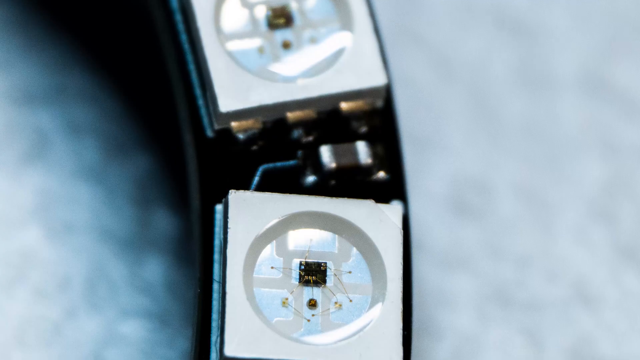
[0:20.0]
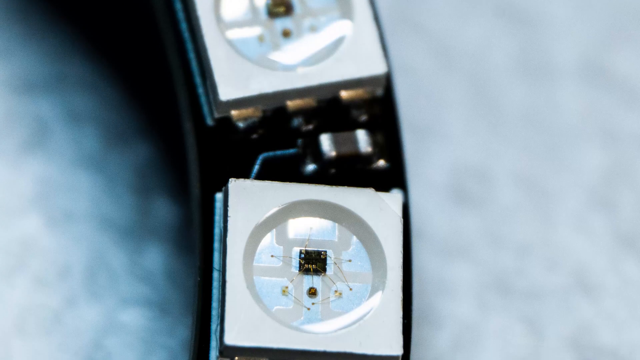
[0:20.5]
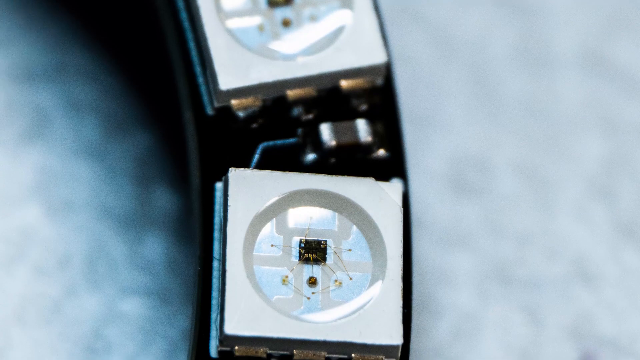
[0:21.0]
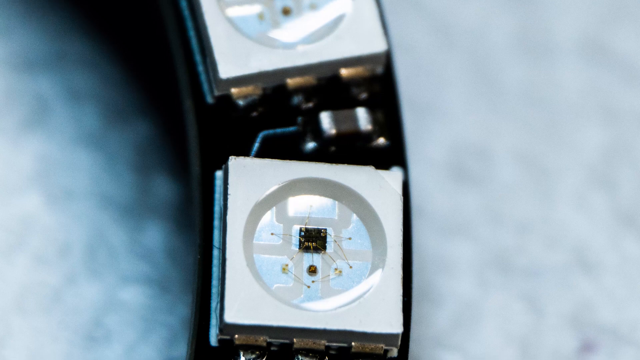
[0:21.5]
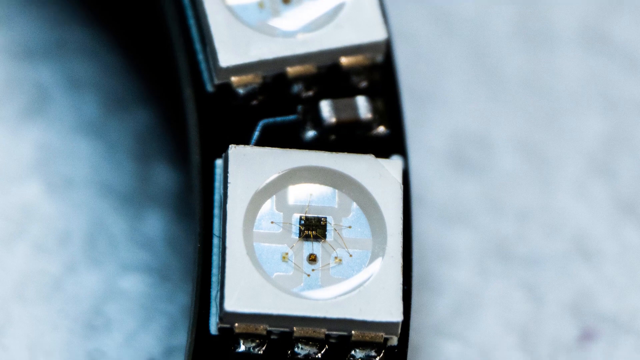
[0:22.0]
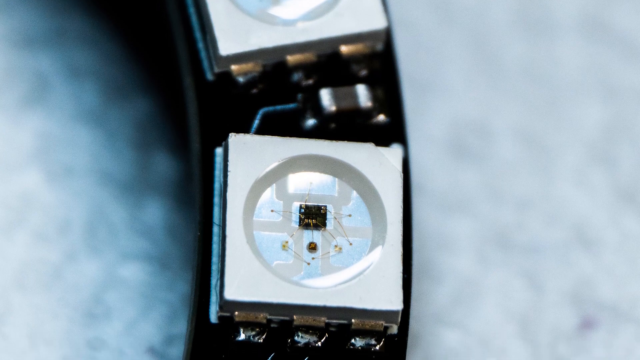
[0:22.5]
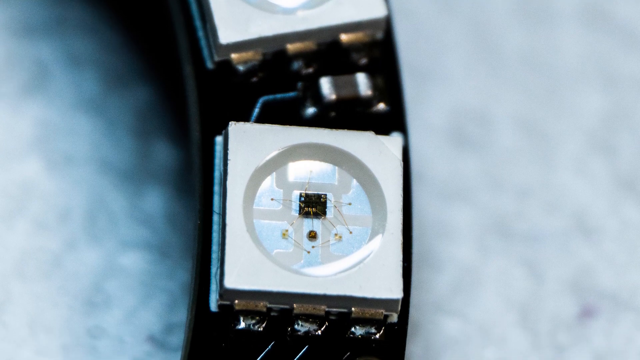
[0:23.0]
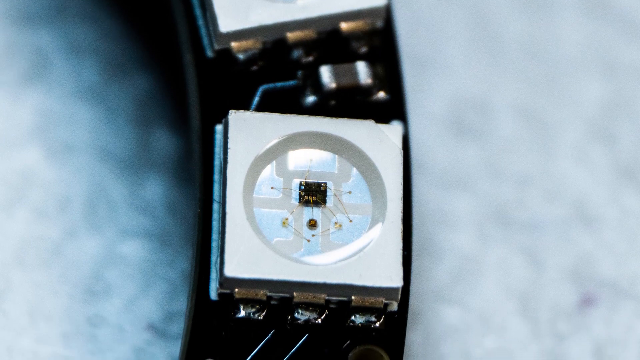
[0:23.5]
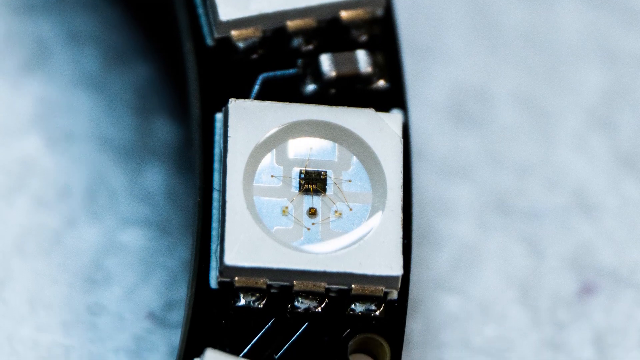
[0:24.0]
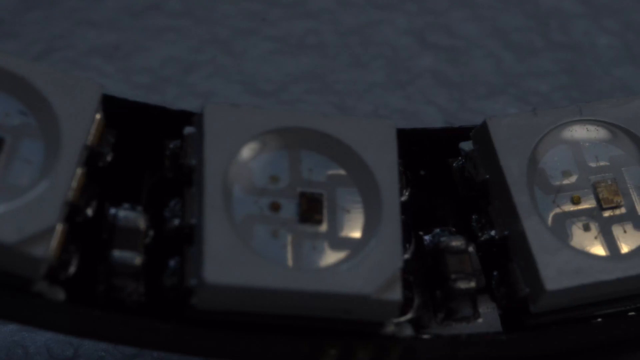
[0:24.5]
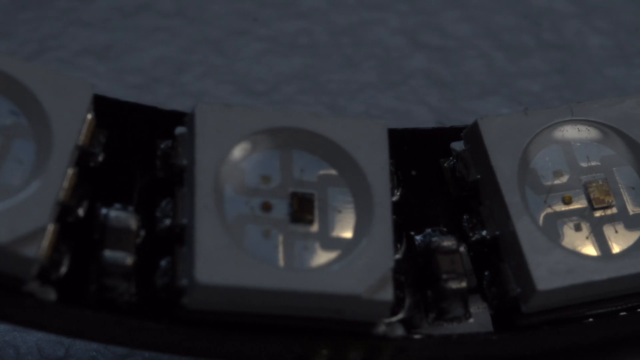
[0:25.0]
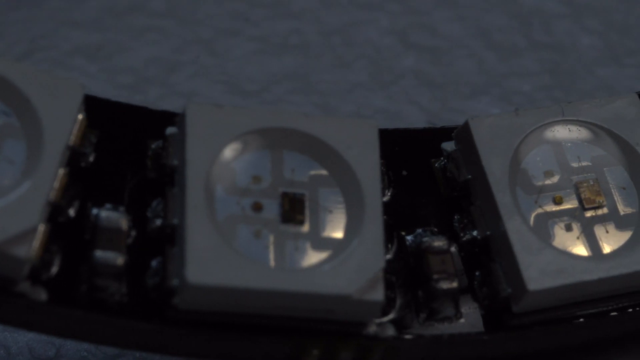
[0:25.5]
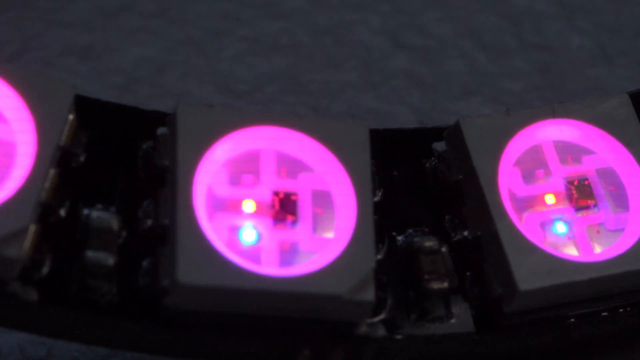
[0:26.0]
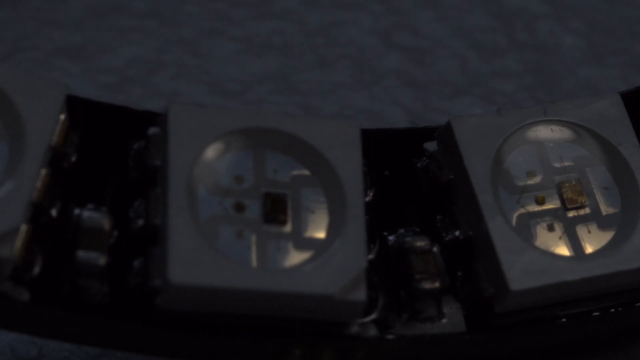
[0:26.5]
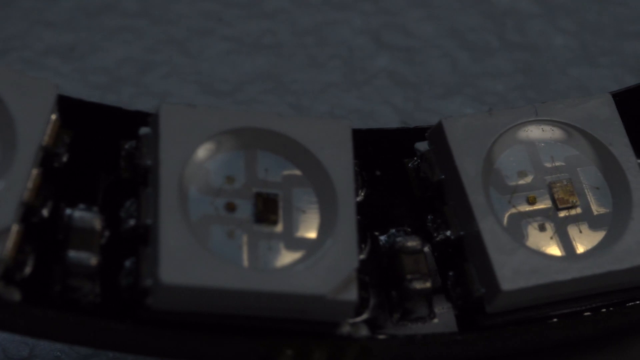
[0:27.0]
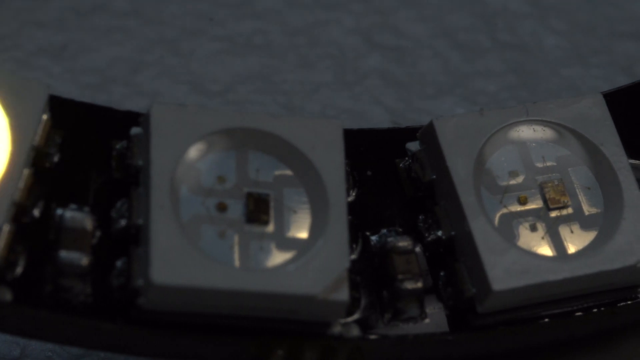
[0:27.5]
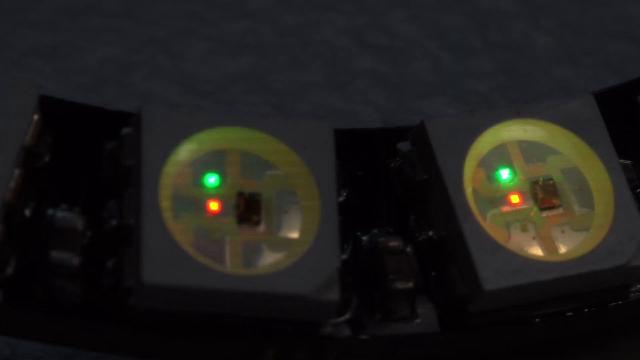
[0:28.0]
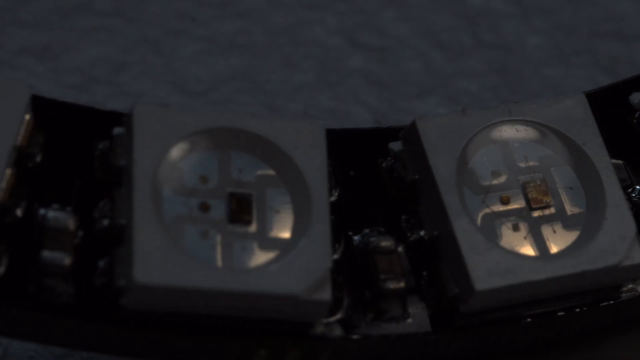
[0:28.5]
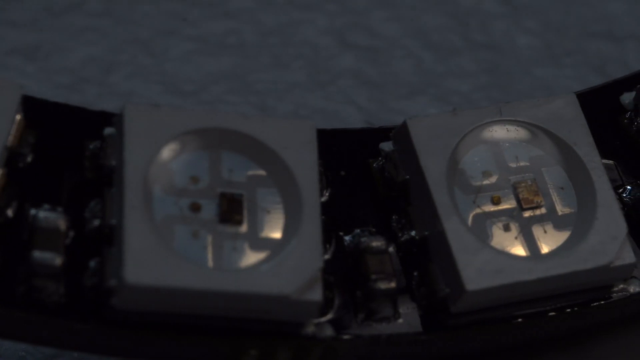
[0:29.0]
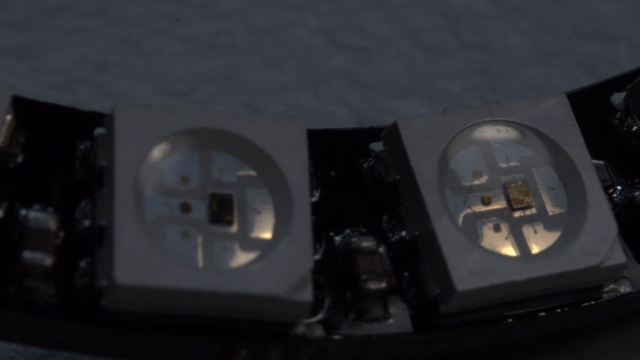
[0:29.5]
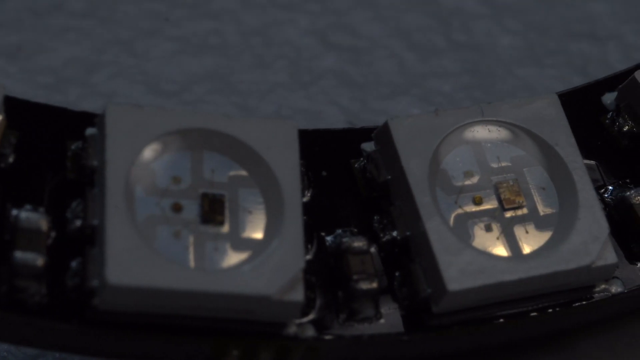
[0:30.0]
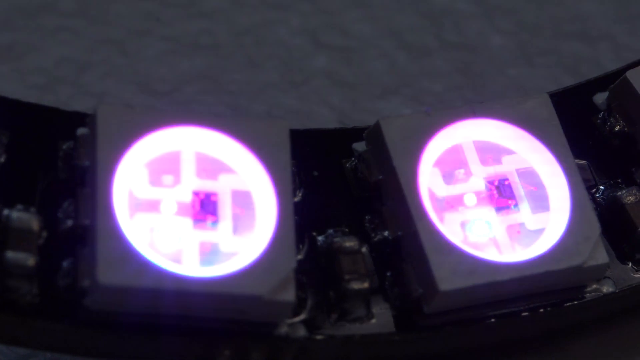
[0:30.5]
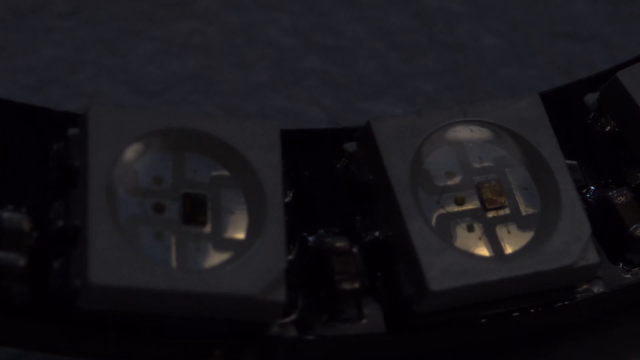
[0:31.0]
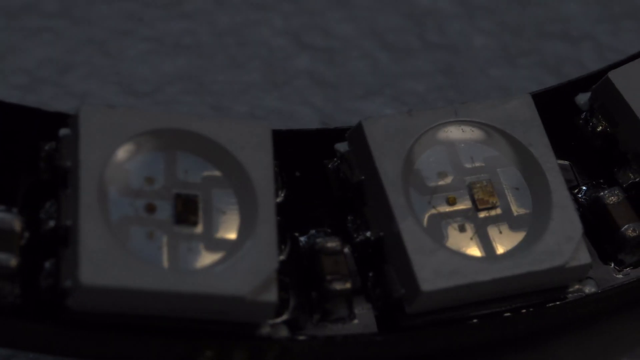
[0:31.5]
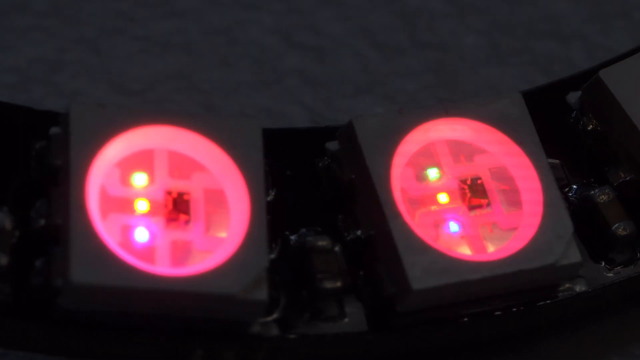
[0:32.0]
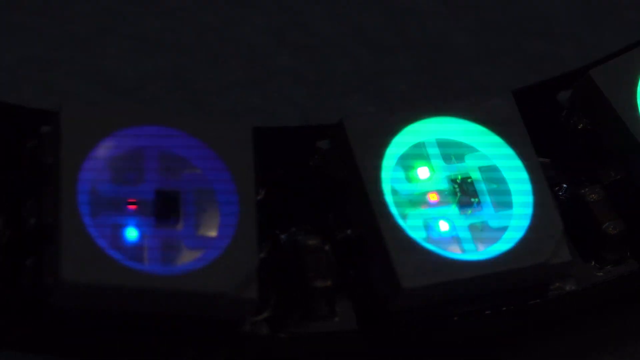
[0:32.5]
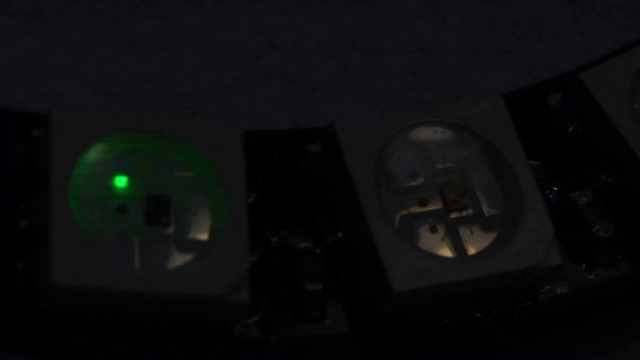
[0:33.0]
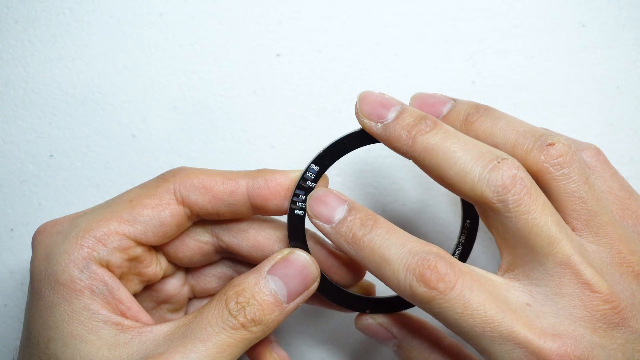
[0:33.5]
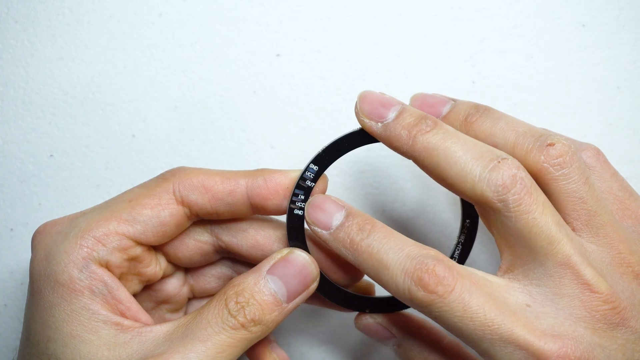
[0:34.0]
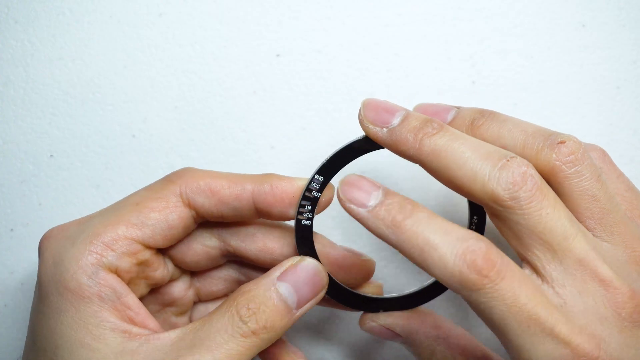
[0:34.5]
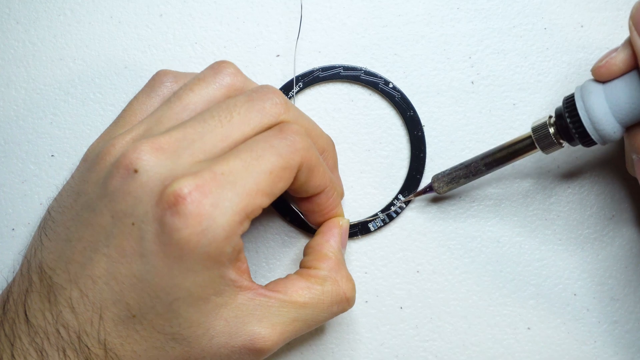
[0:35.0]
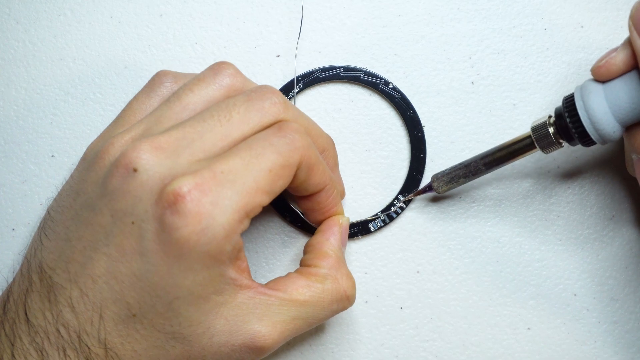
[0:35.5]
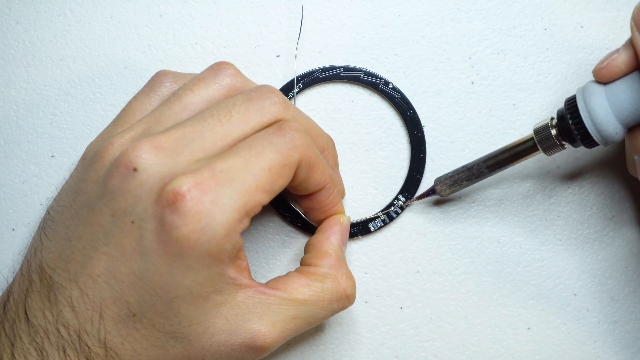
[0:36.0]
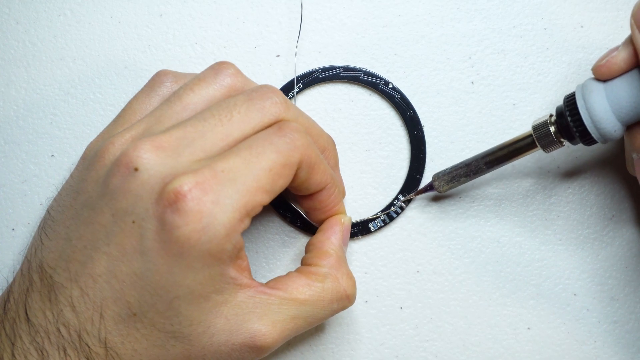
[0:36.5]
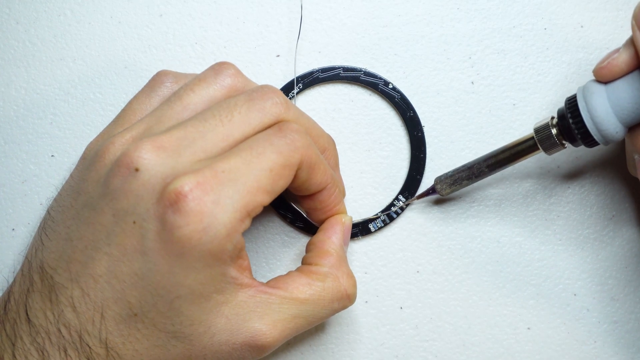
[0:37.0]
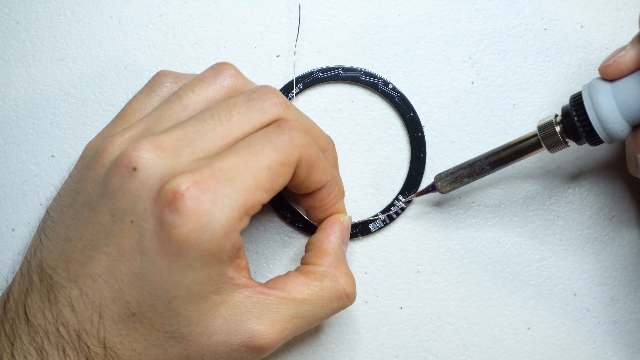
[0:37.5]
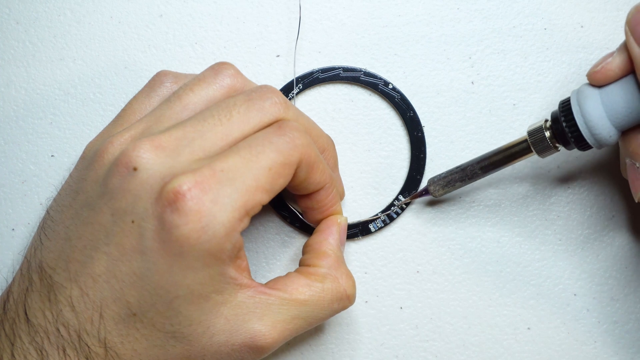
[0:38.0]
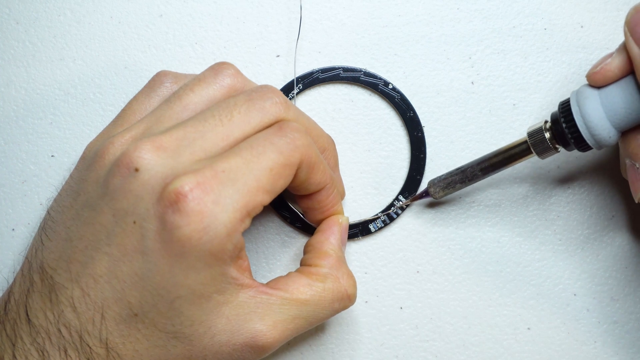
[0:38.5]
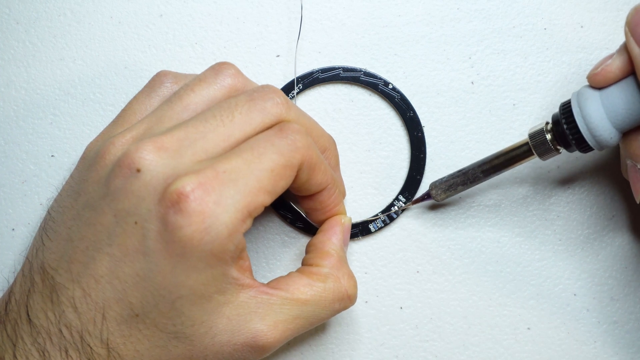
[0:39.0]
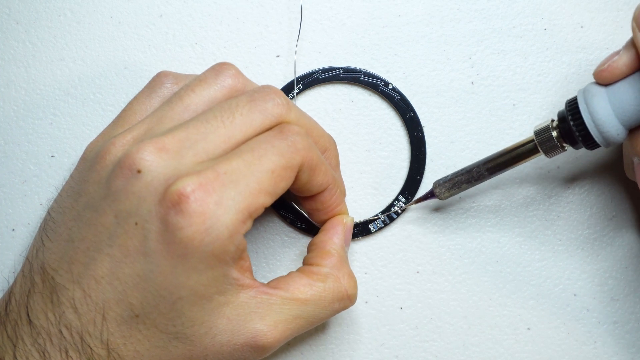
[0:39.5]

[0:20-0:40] A close-up shows the inside of what appears to be a radio of some sort, exposing its internal wiring and some white boxes against a white background. The video transitions to a close-up of glowing neon lights on a white square, connected to each other by a black panel. The lights glow periodically in yellow, then glow again in purple, then red, then green. The shot of the two hands holding the hollow circular device returns; the person works on the device and points to its back with their right index finger. Someone then uses a long, tube-like needle tool to change the circuits on the black back of the circular object, making very precise movements.